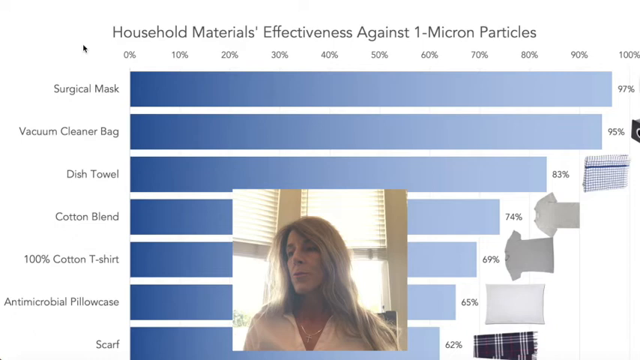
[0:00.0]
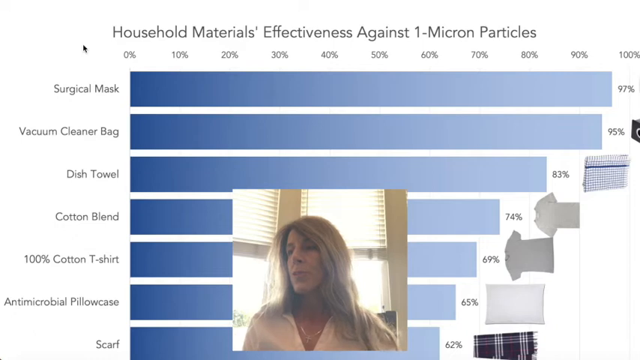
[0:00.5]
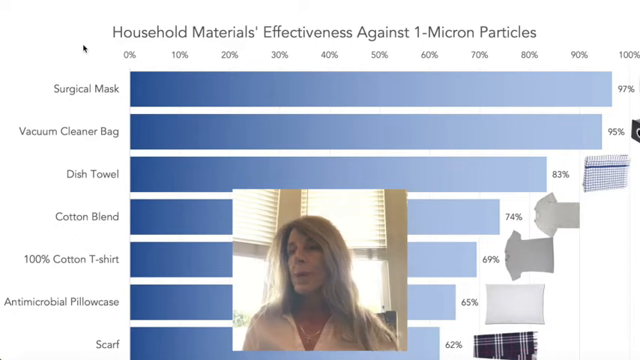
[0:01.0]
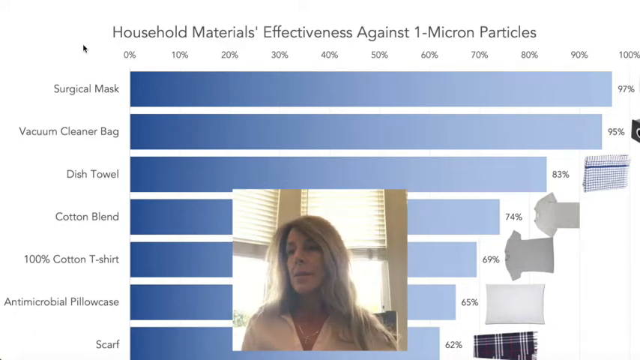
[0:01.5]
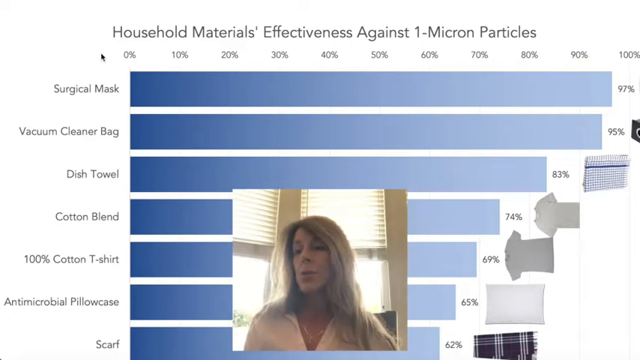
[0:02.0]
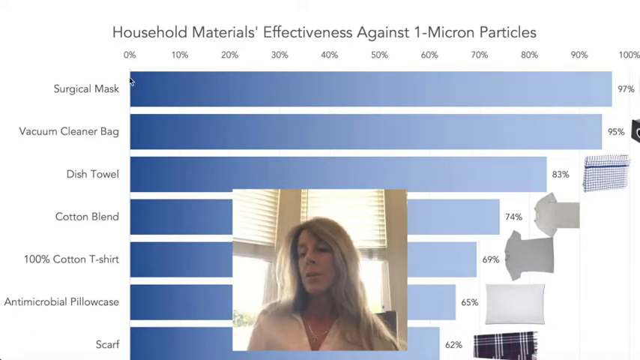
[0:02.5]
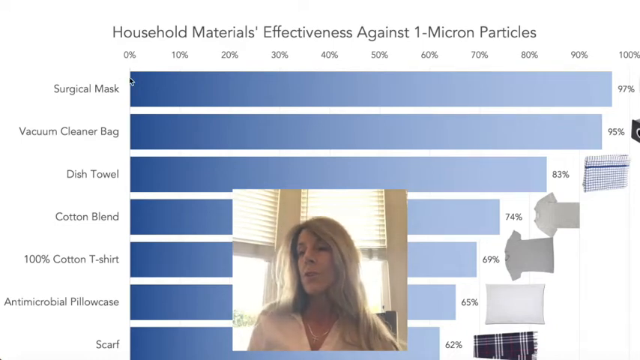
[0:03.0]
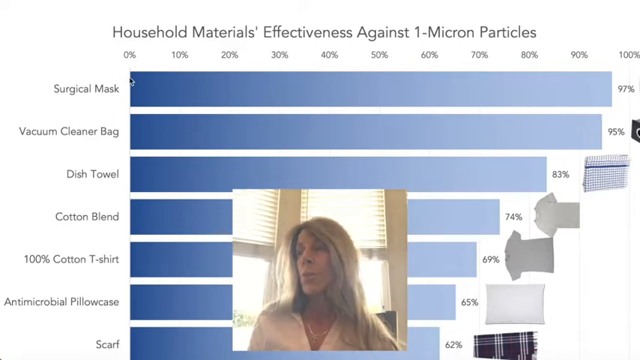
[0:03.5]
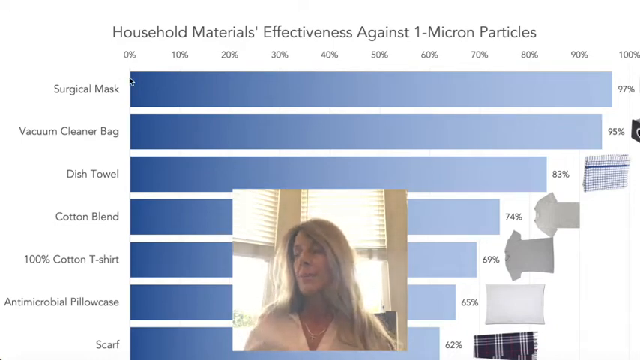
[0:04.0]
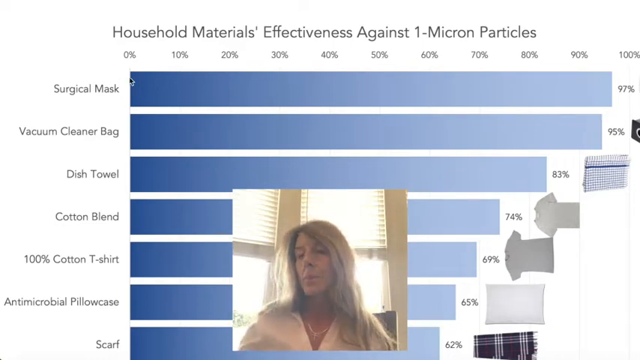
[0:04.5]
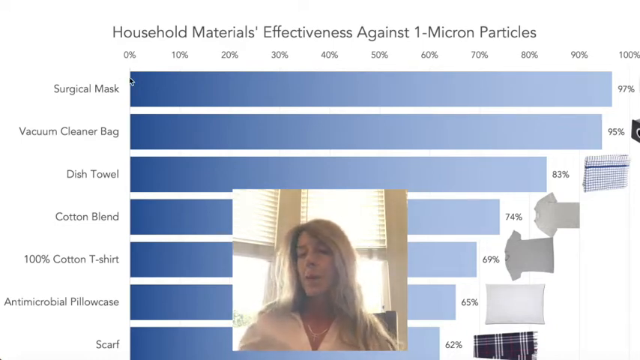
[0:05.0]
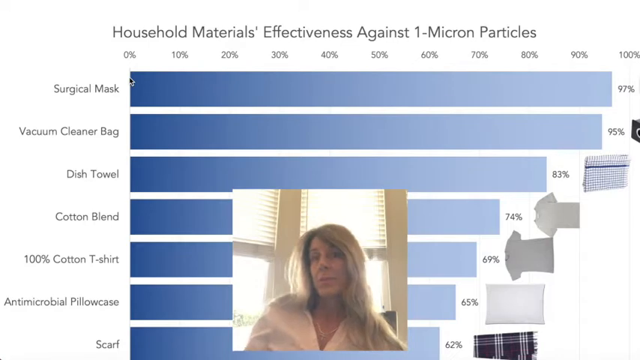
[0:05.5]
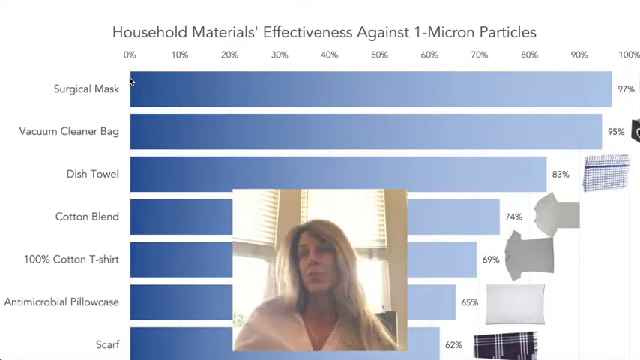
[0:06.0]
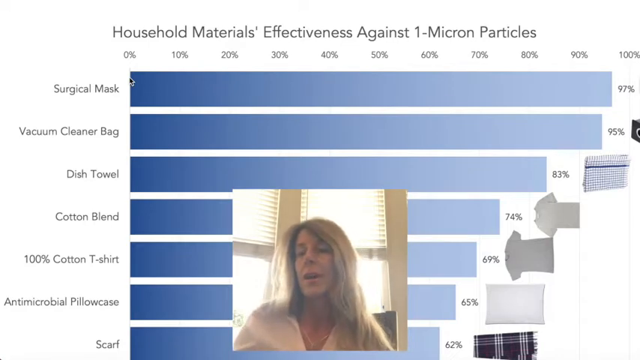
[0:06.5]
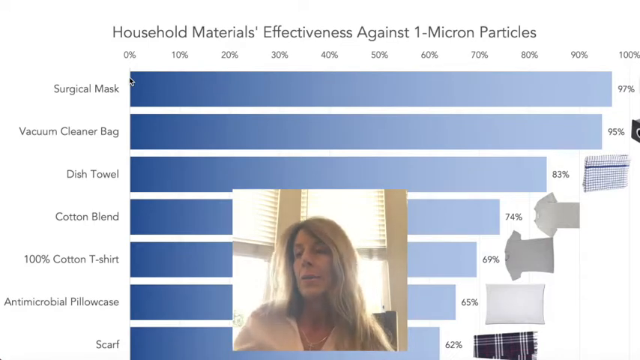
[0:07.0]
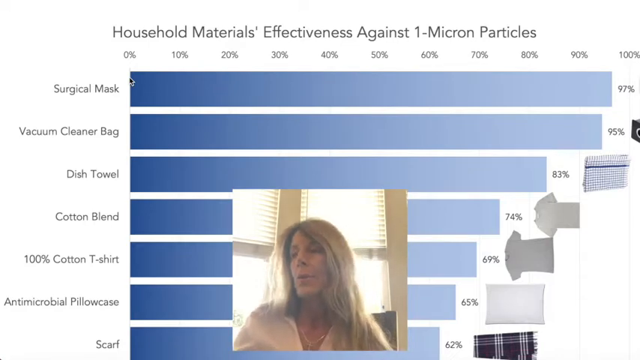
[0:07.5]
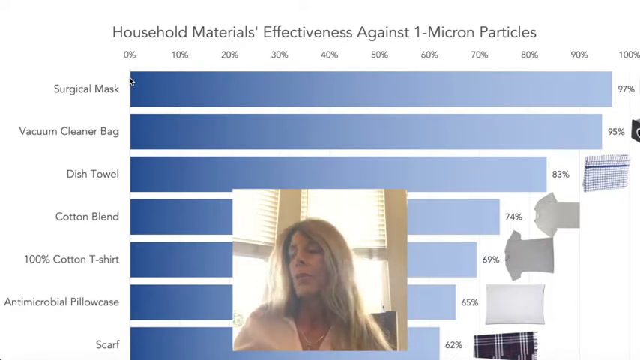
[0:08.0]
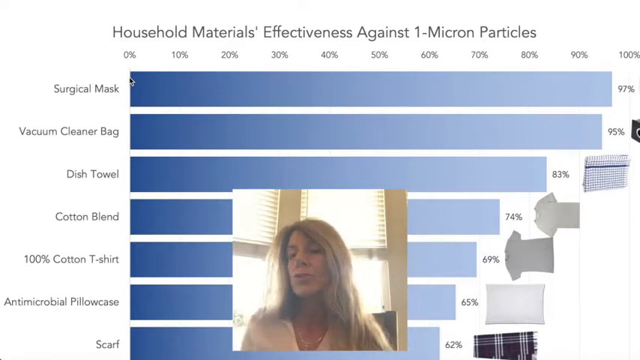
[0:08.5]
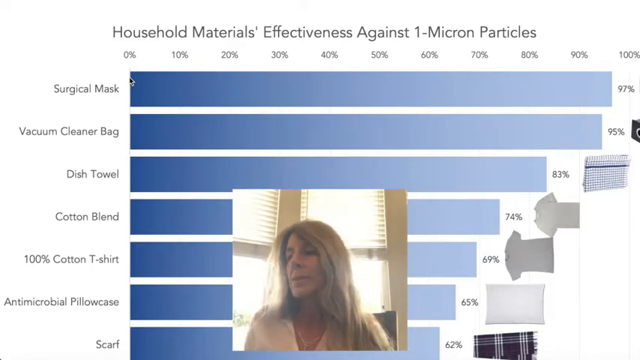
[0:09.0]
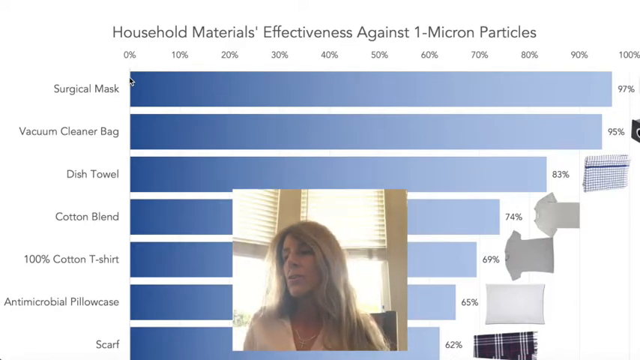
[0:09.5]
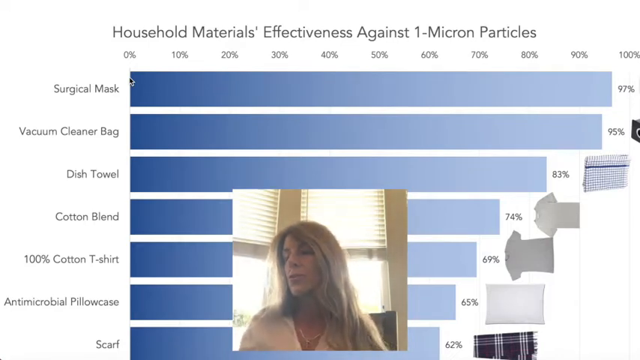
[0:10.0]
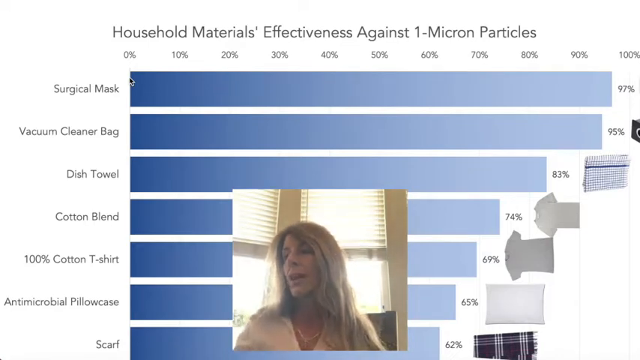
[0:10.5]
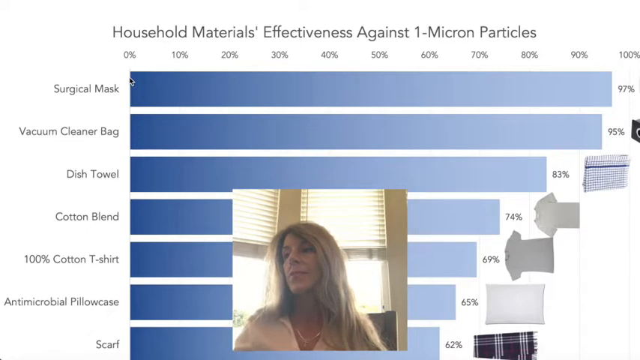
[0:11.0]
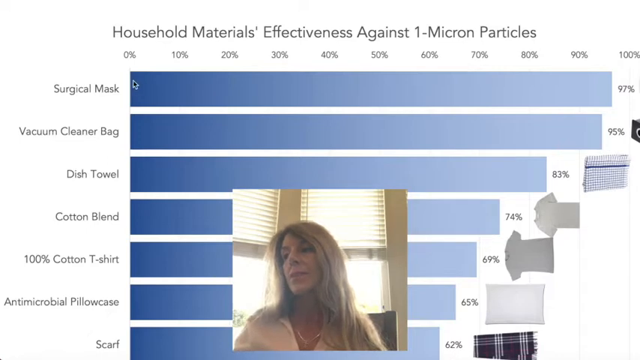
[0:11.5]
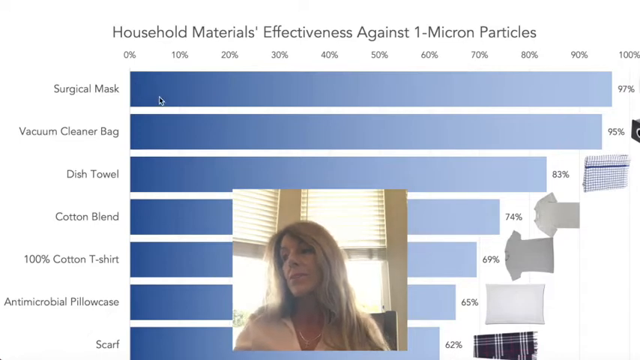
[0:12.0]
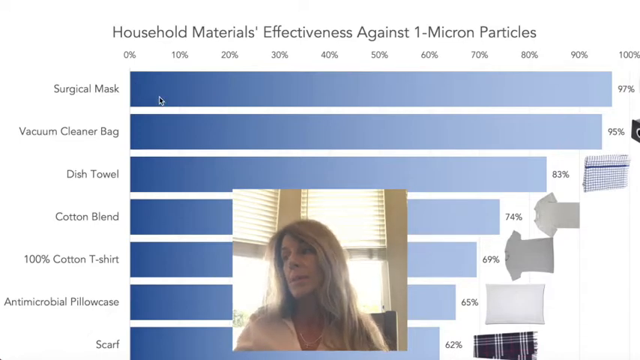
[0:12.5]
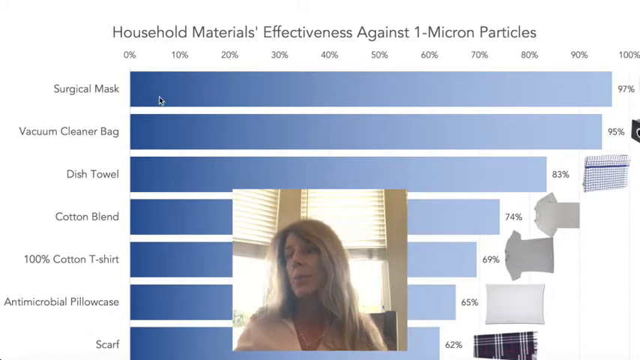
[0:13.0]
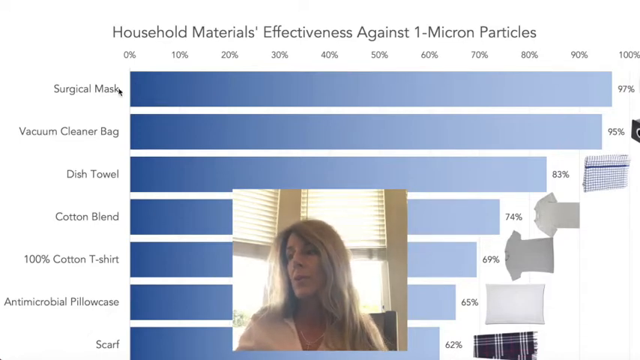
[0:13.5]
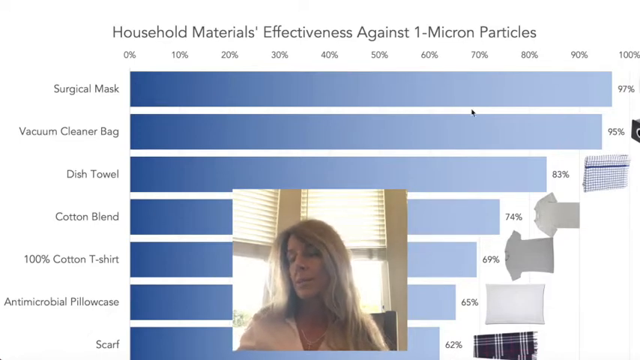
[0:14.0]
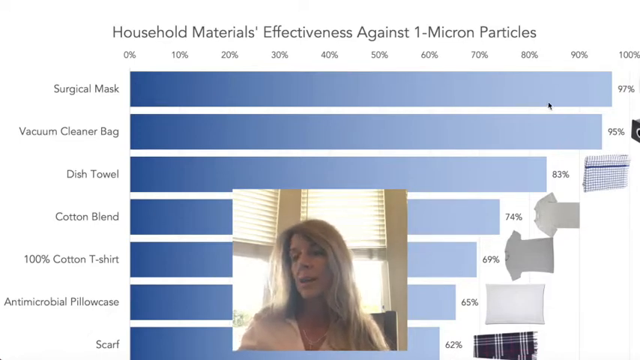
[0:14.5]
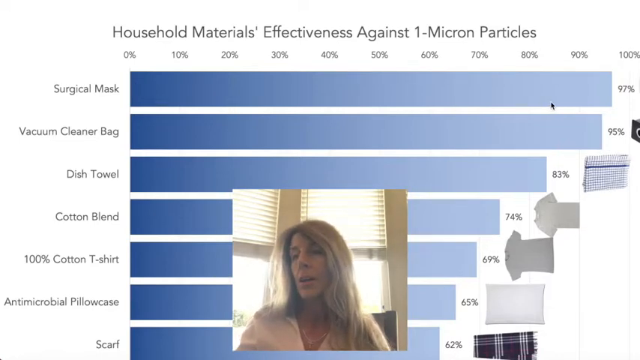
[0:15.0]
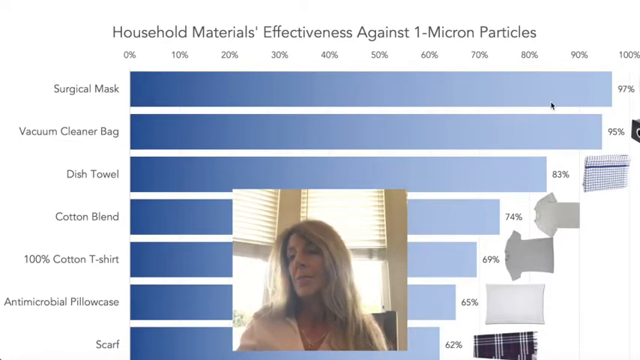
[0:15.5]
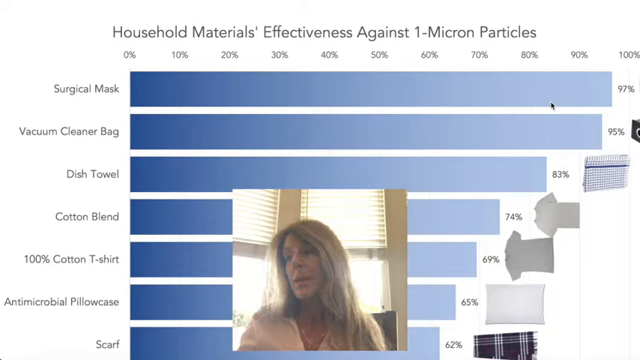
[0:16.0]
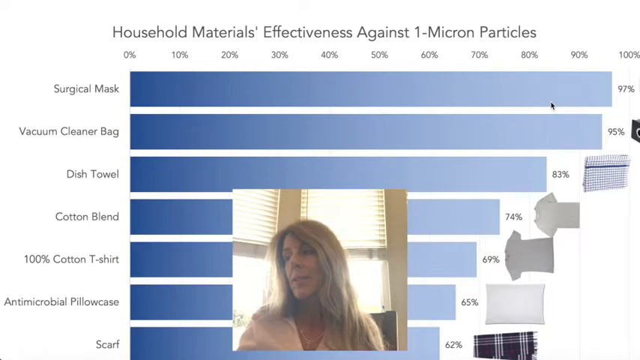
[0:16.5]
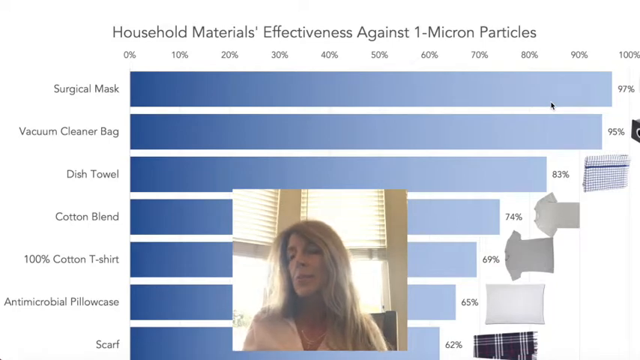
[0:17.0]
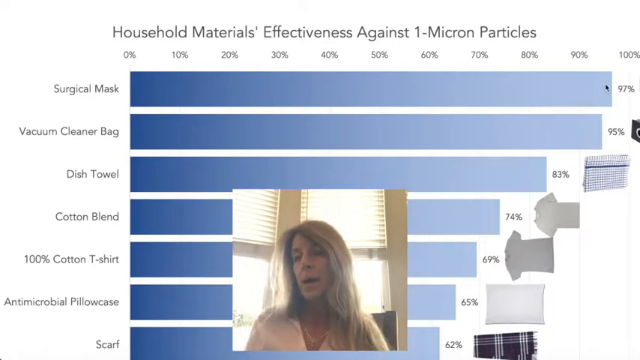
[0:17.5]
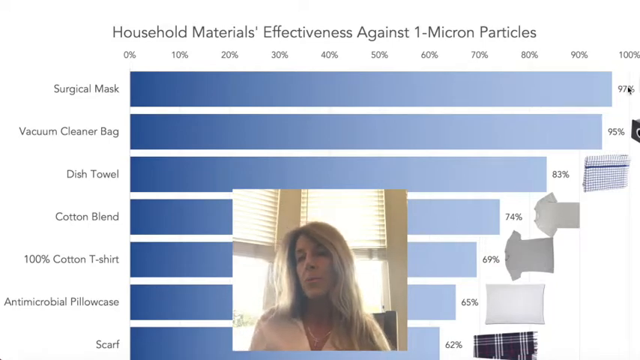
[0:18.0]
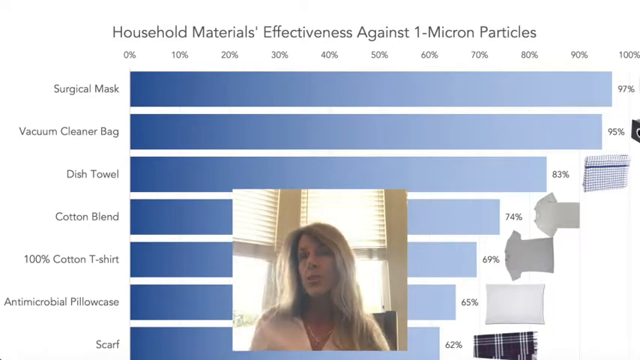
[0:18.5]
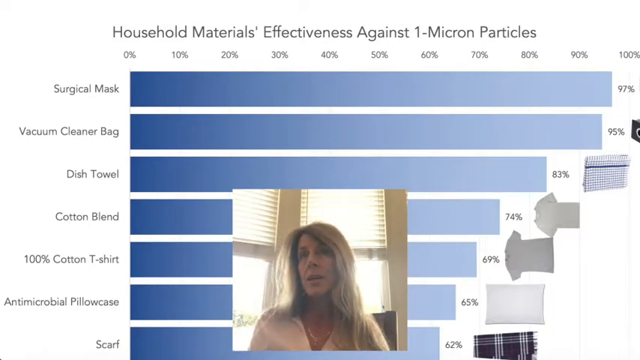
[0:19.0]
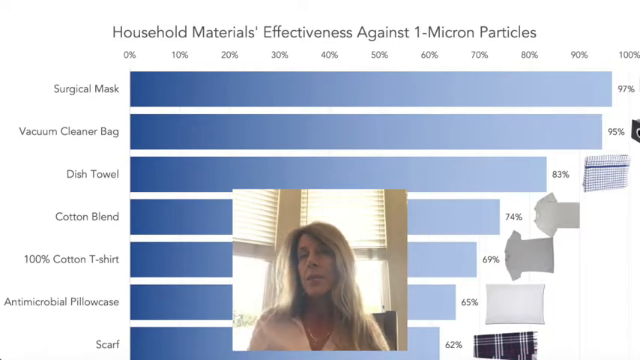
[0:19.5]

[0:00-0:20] A bar graph fills the background, and at the bottom is a window showing a woman. She sits in front of a pair of windows with curtains drawn over them, has long hair, wears a white shirt and faces the viewer. The graph is titled "Household Materials' Effectiveness Against 1-Micron Particles." On the Y axis are seven horizontally arranged bars labelled "Surgical Mask" at 97%, "Vacuum Cleaner Bag" at 95%, "Dish Towel" at 83%, "Cotton Blend" at 74%, "100% Cotton T-shirt" at 69%, "Antimicrobial Pillowcase" at 65% and "Scarf" at 62%. The X axis runs from 0% to 100% in 10% increments, listed left to right. At the start the woman speaks while looking to the left and down, blinking as she talks. She brings the cursor to the right side of the screen, then to the upper right, where it hovers over the percentage to the right of the Surgical Mask bar.